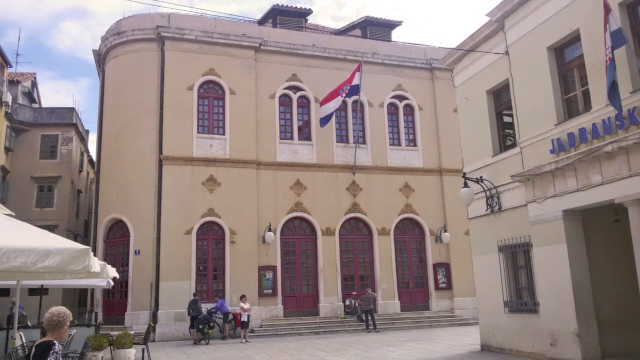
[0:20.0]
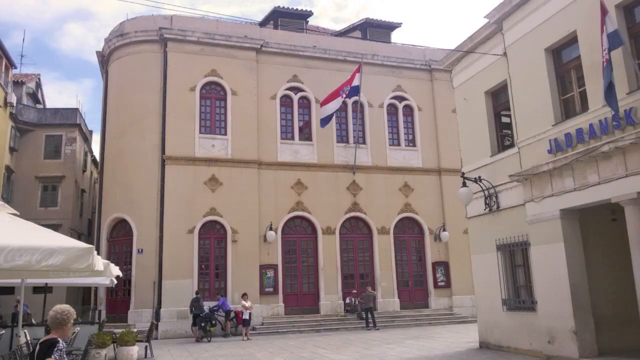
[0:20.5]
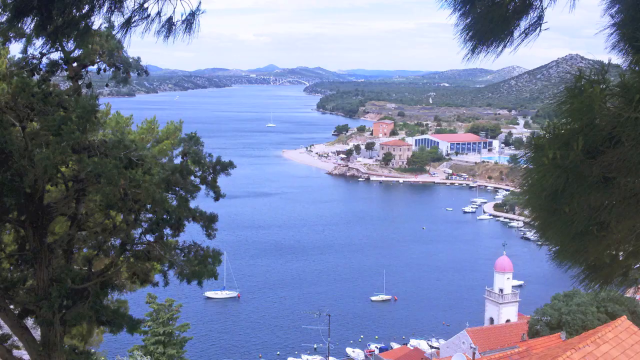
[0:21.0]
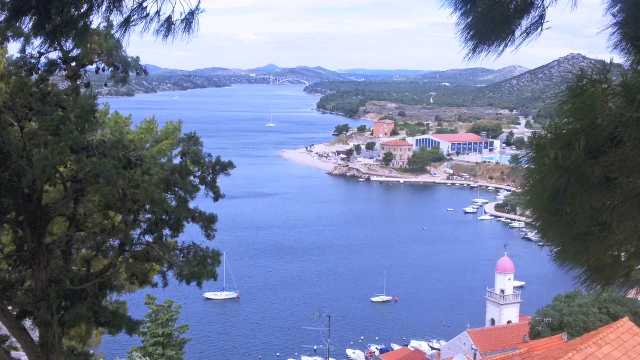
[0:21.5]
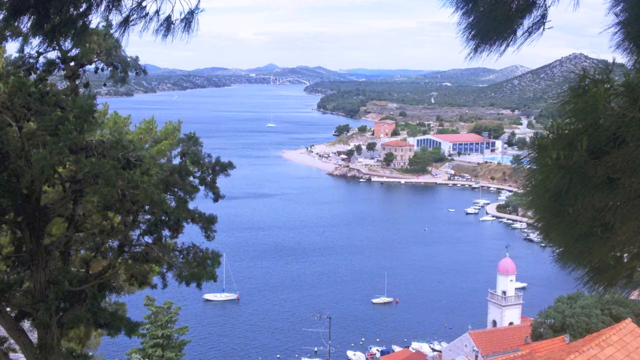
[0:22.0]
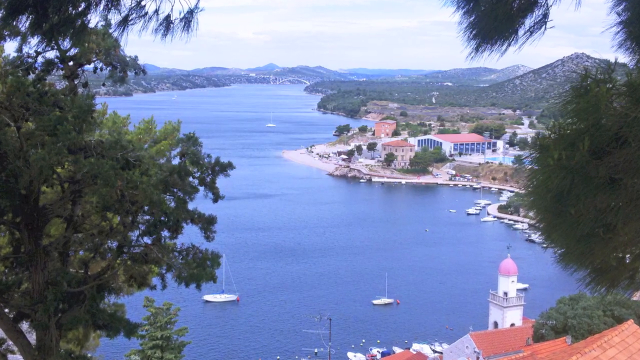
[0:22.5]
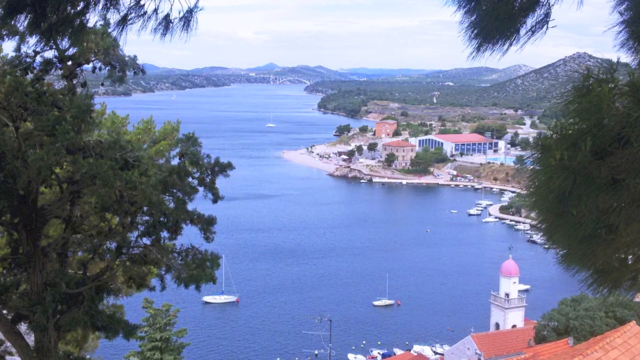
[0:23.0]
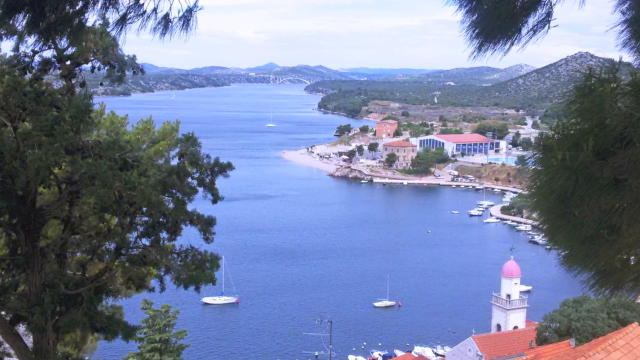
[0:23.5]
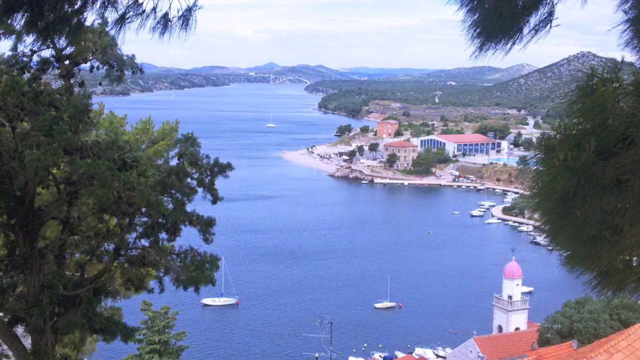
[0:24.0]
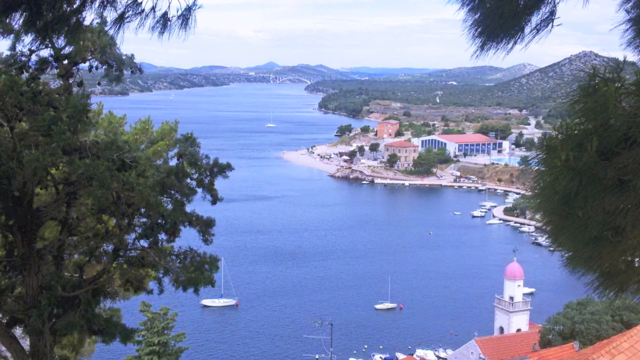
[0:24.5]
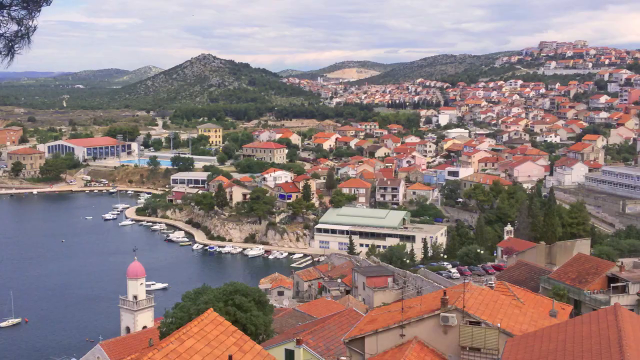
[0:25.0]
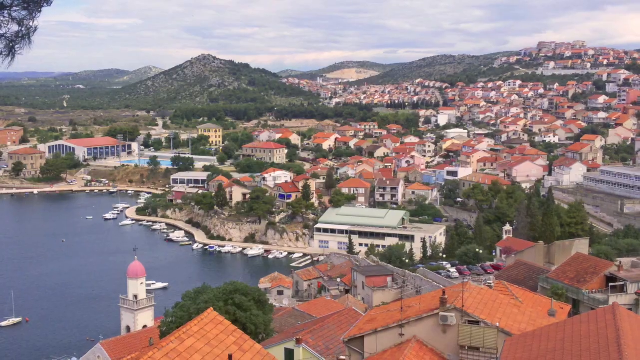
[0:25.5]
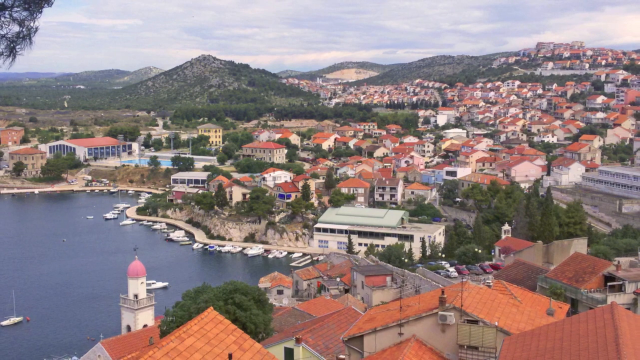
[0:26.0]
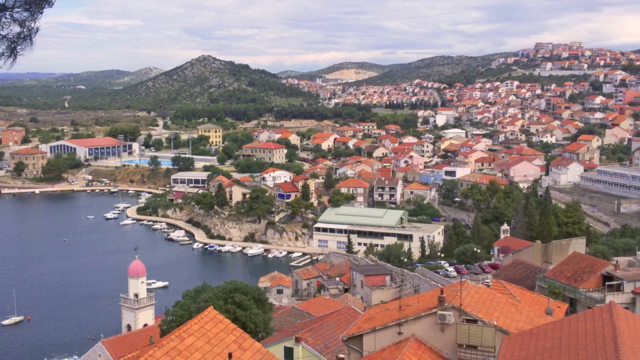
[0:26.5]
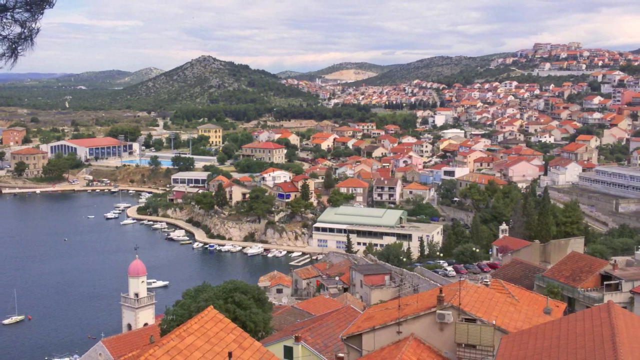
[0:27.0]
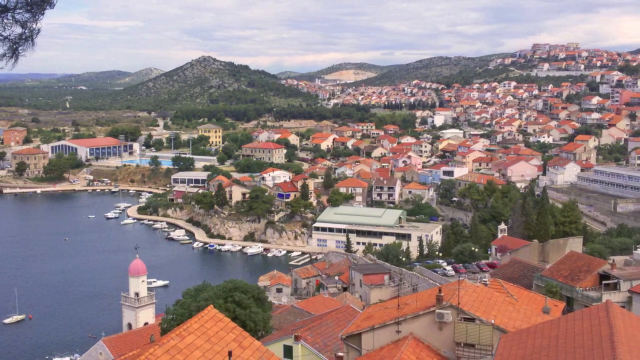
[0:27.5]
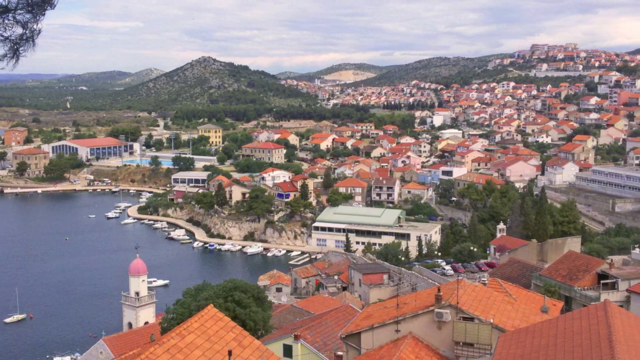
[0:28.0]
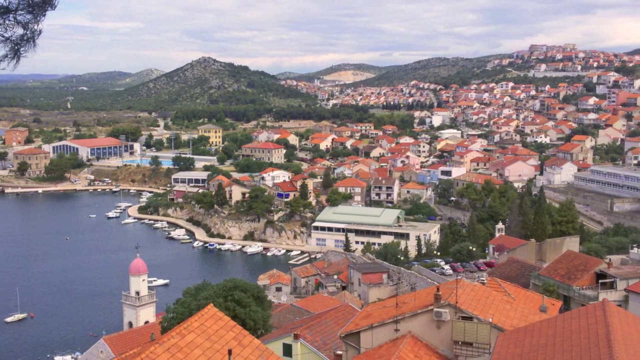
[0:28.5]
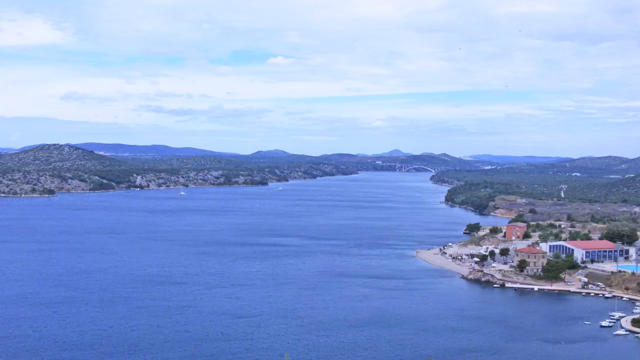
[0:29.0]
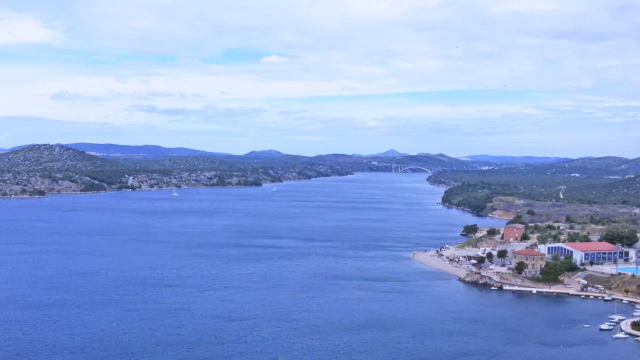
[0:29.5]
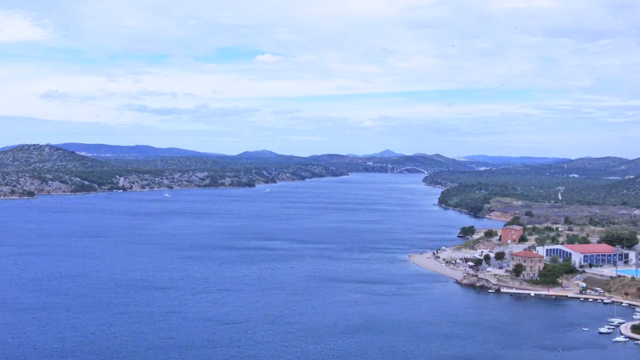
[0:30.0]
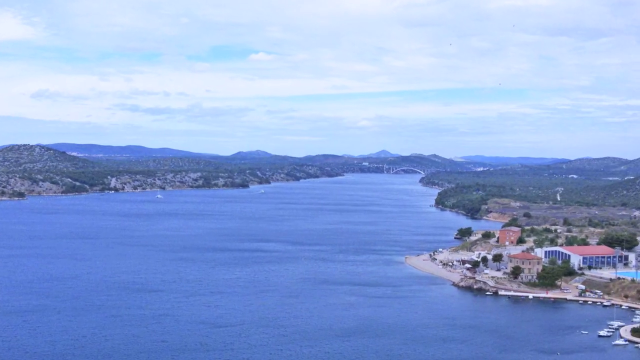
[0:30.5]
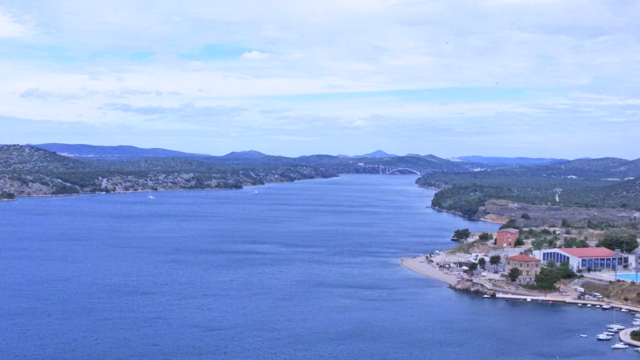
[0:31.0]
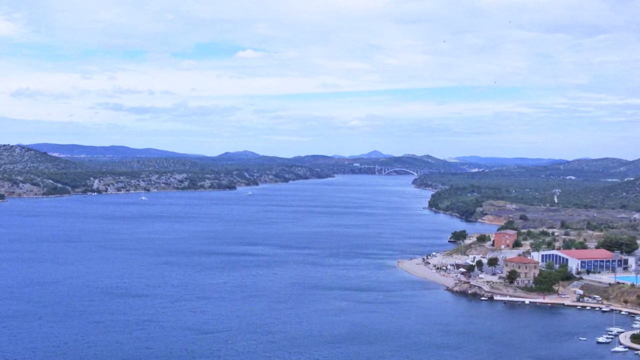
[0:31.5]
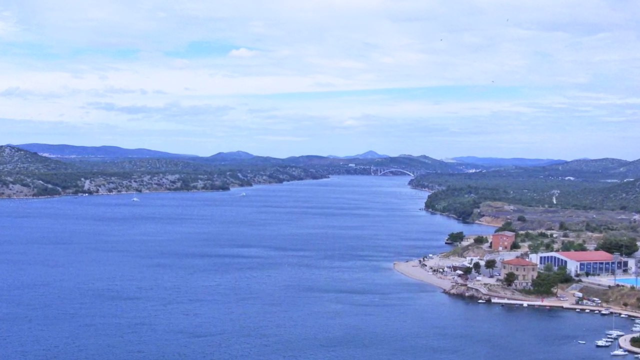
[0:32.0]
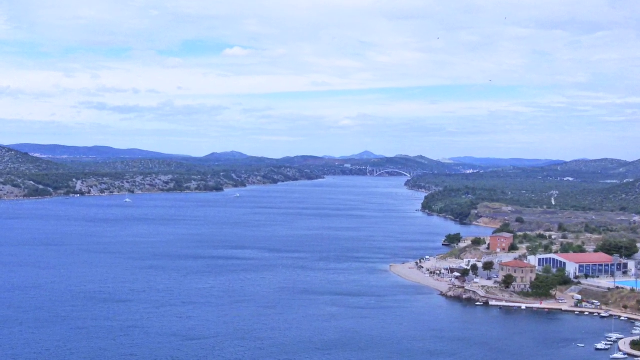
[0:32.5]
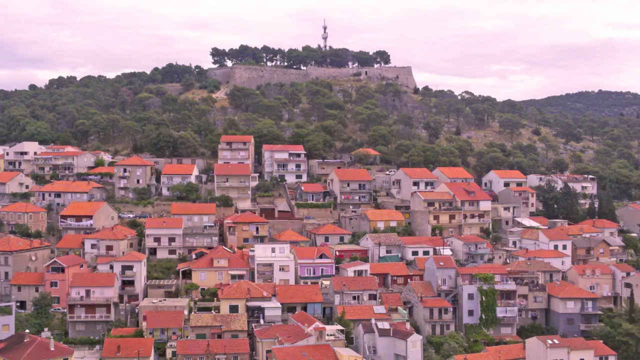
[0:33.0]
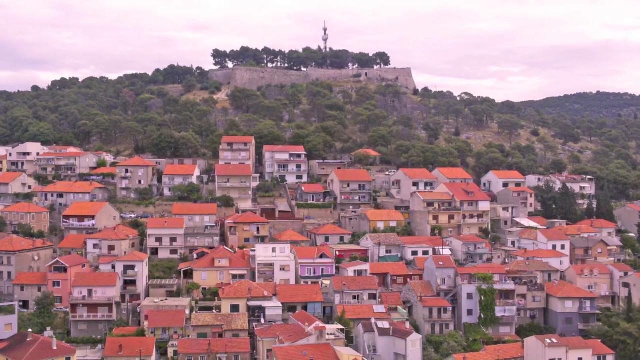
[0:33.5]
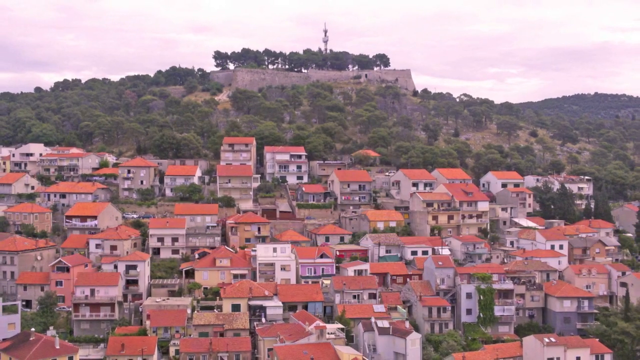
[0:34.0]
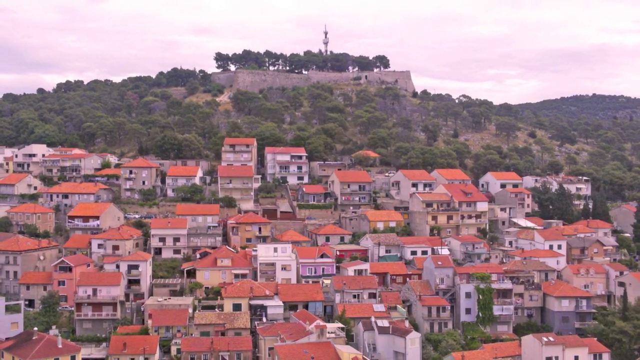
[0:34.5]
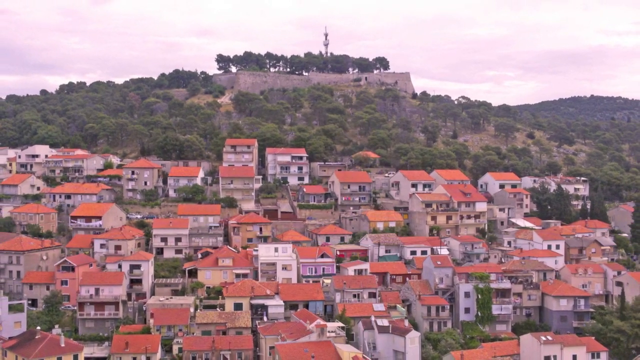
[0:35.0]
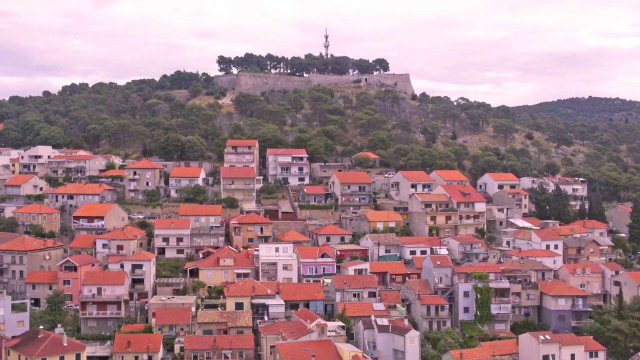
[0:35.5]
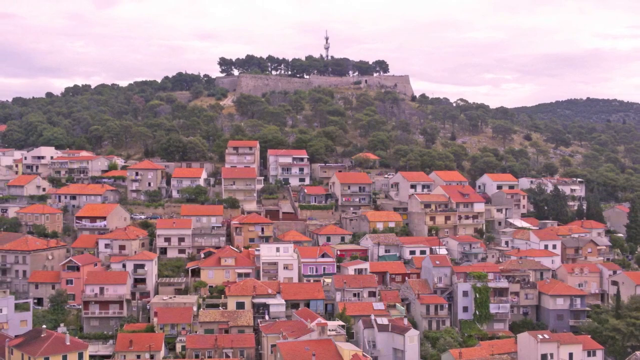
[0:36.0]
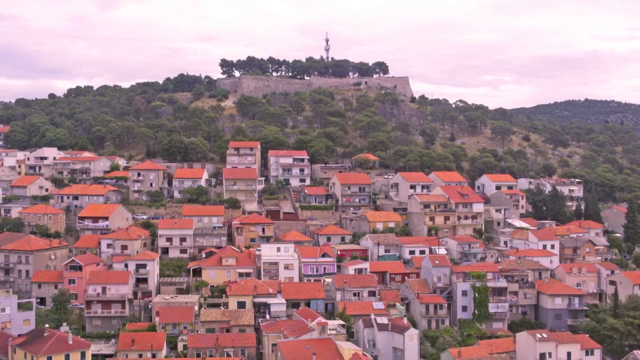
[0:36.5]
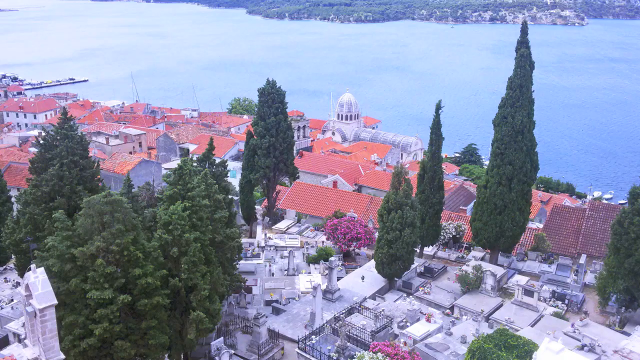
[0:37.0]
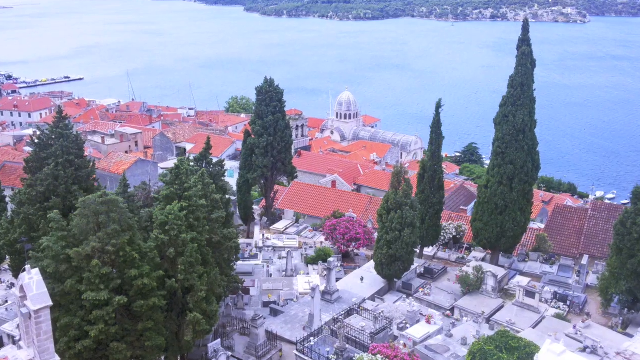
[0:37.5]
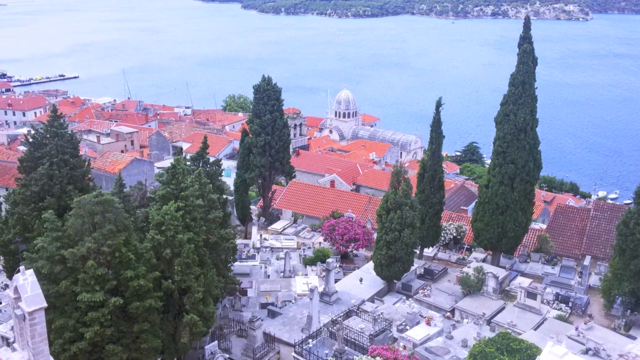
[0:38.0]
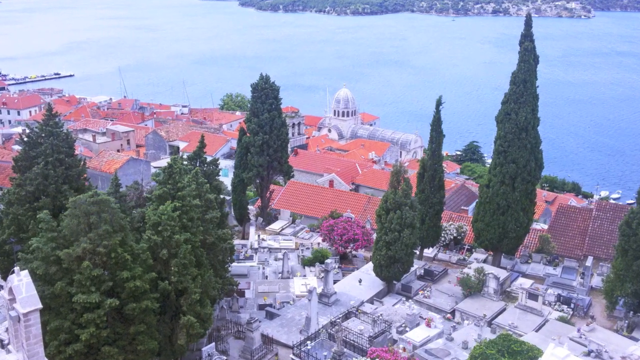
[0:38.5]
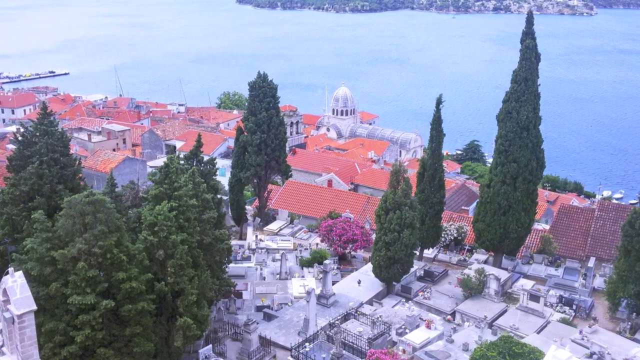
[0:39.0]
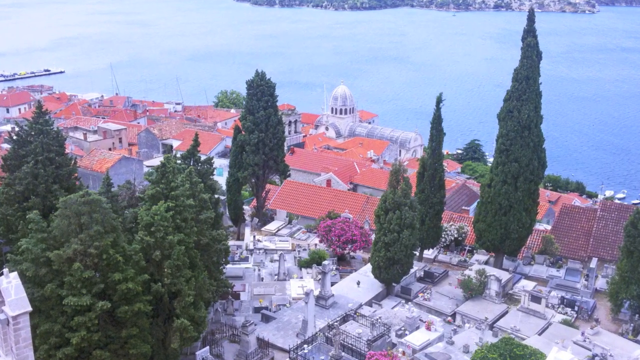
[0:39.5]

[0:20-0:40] The view looks down from high up at some houses and trees, with a lake or ocean also visible, so this is obviously an oceanside or lakeside town. It transitions to another photo looking down almost from a mountain: trees are on the side, and between the trees is a huge lake, ocean or bay with a couple of boats in the water. Houses and buildings are on the right side, and more mountains are in the background. The video then transitions to the lakeside or oceanside town, where houses are scattered on mountains and hills, with the edge of the lake, bay or ocean on the left-hand side. Next the focus shifts to the ocean, which makes up the majority of the shot on the left, with some mountains in the background and a few buildings on the right-hand side of the ocean. The video then shows a photograph of many houses on a hill, most with orange roofs, with just trees on top of the hill; judging by the clouds, it looks like an overcast day. Finally there is an overhead view of more houses and trees with the ocean or lake in the background.